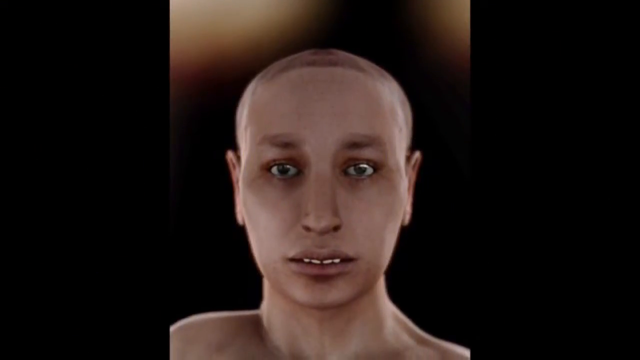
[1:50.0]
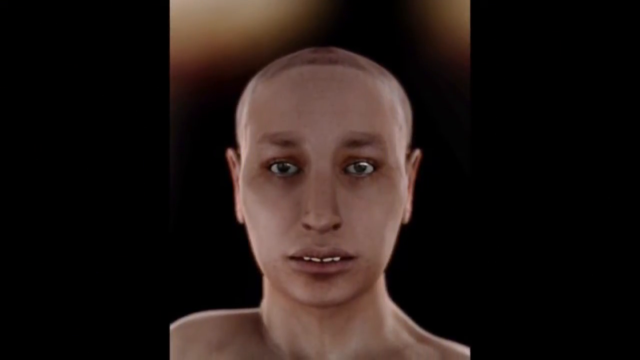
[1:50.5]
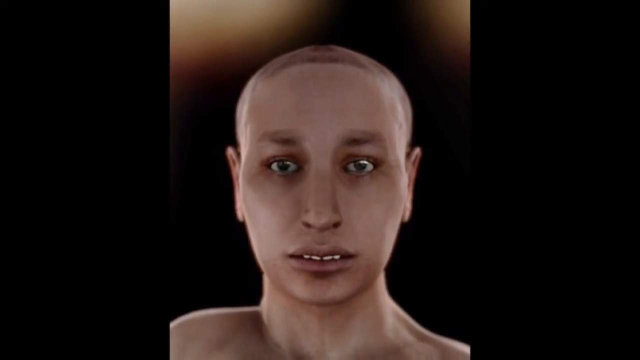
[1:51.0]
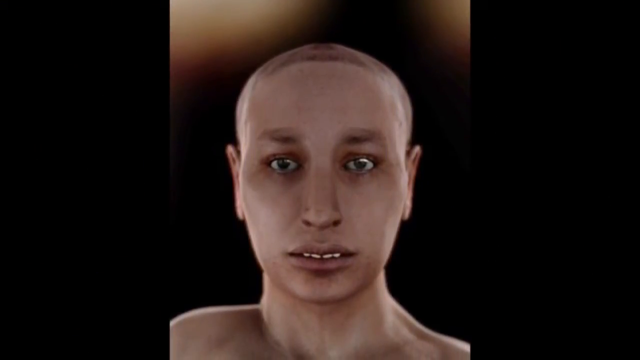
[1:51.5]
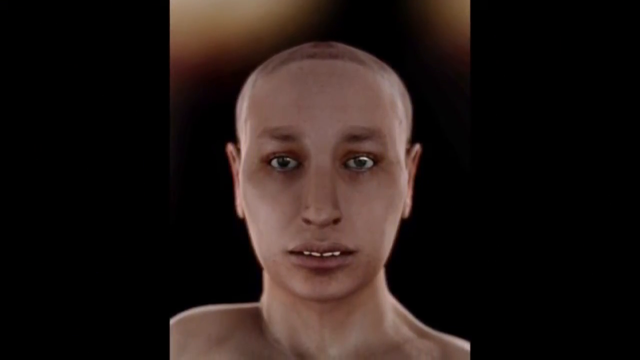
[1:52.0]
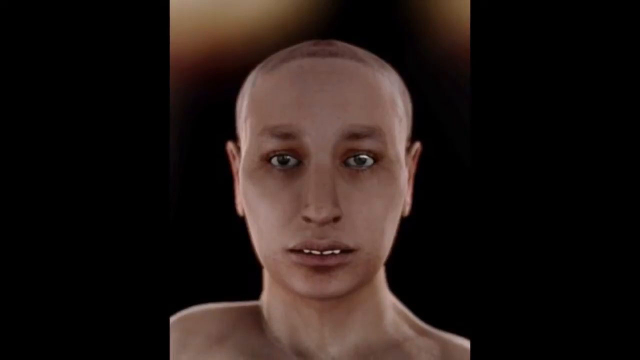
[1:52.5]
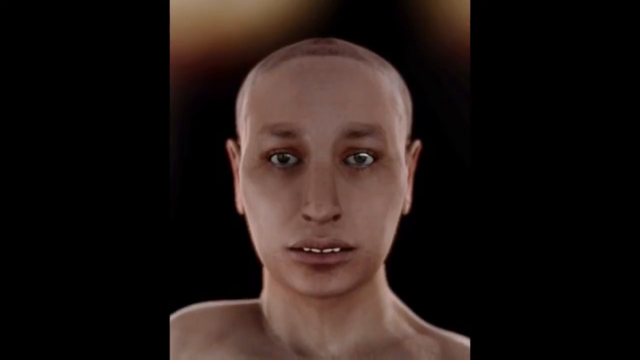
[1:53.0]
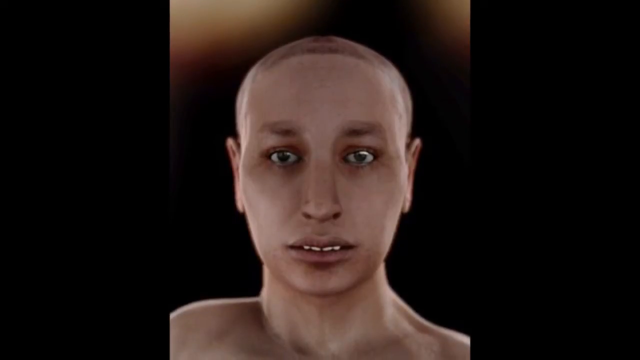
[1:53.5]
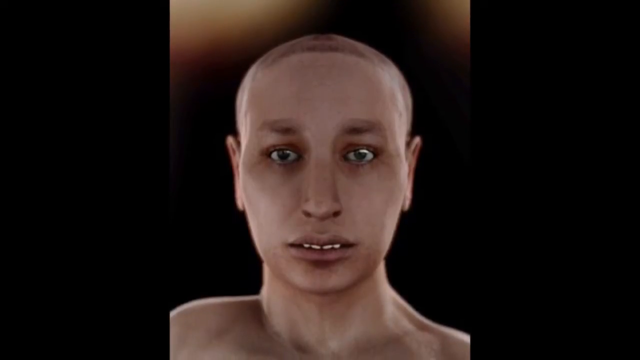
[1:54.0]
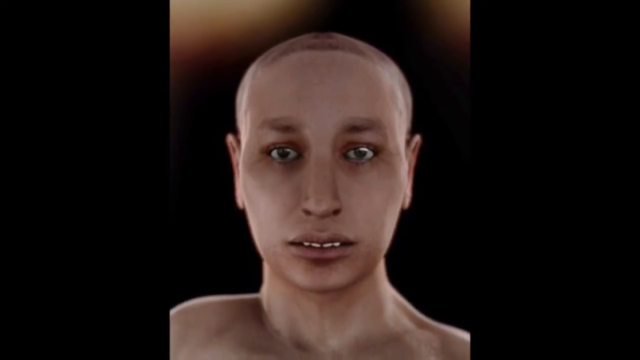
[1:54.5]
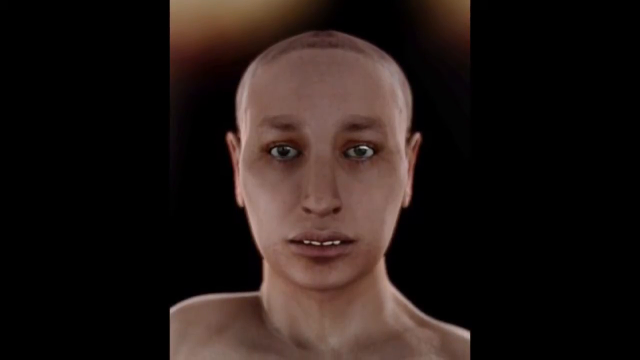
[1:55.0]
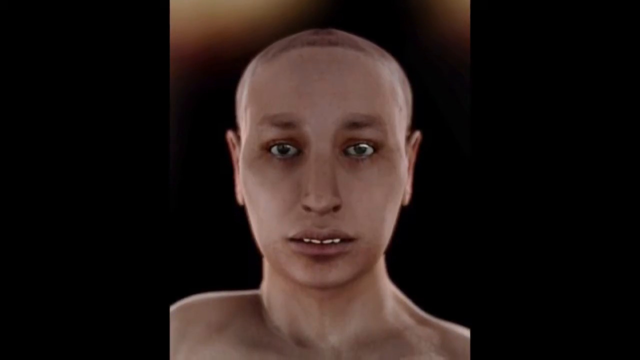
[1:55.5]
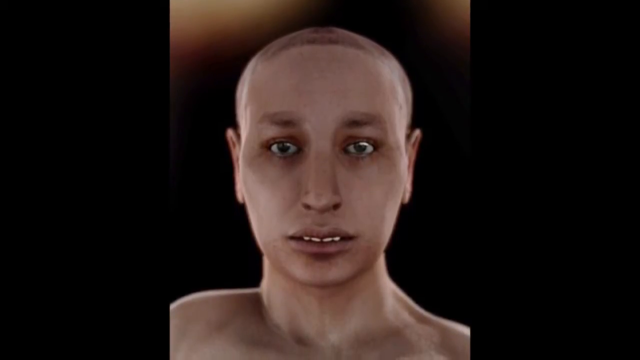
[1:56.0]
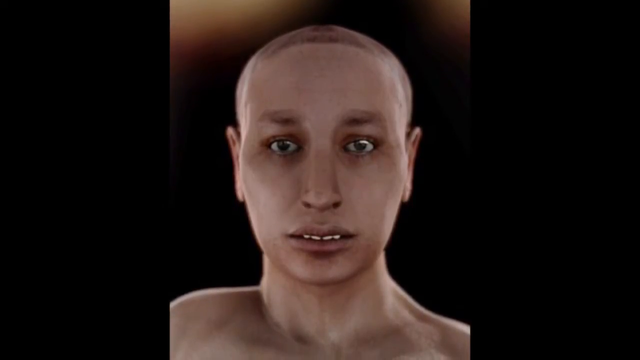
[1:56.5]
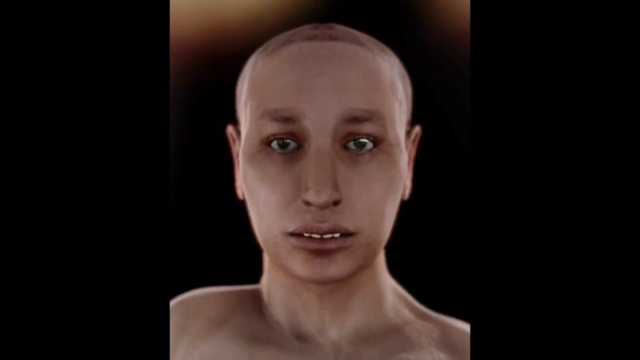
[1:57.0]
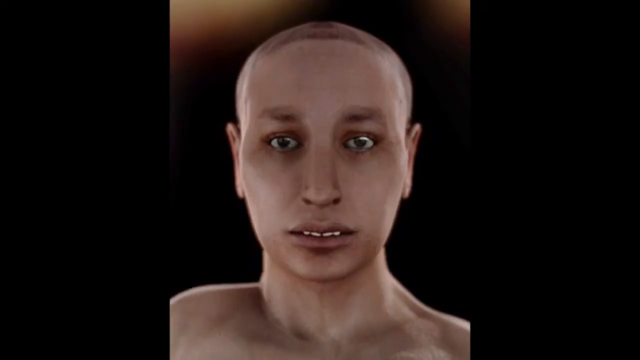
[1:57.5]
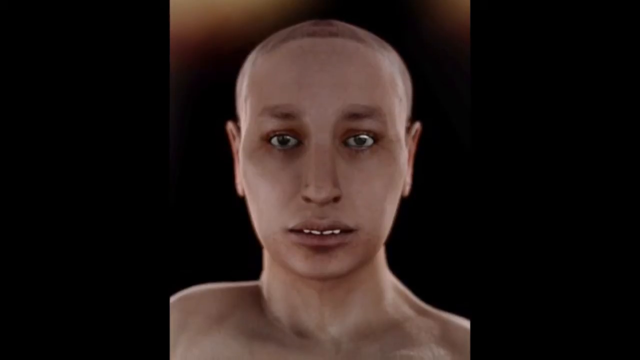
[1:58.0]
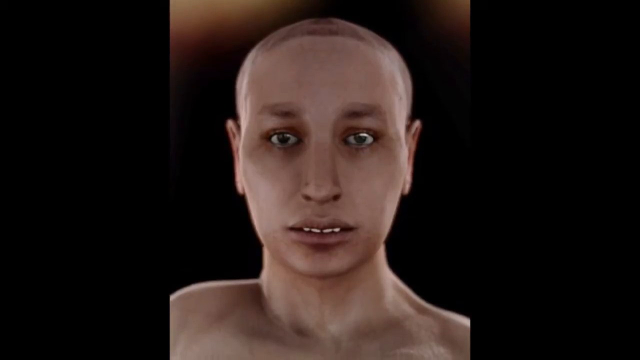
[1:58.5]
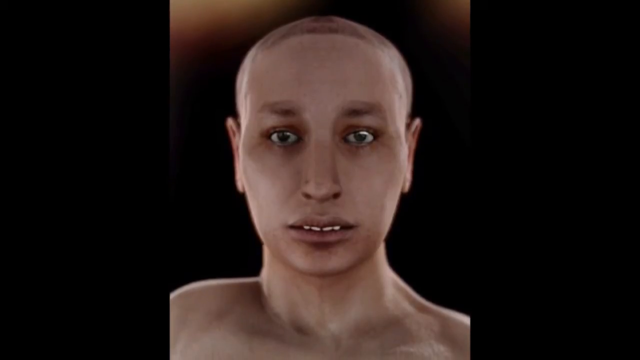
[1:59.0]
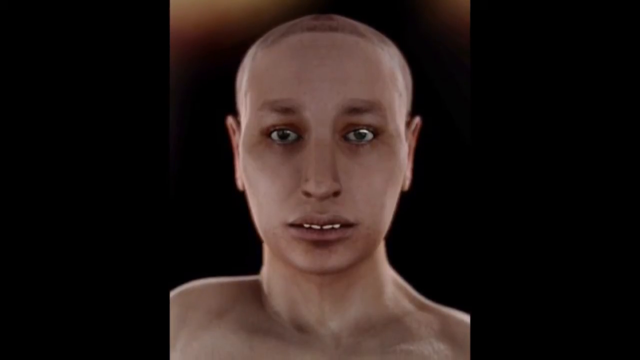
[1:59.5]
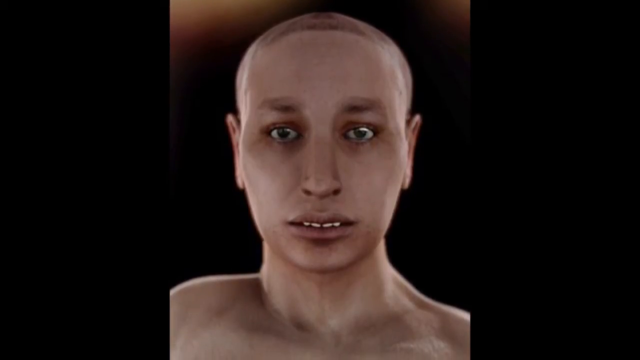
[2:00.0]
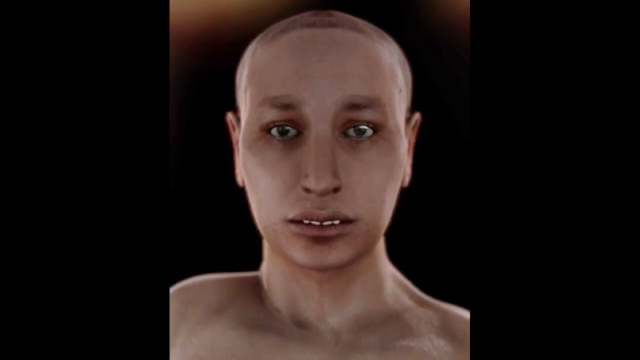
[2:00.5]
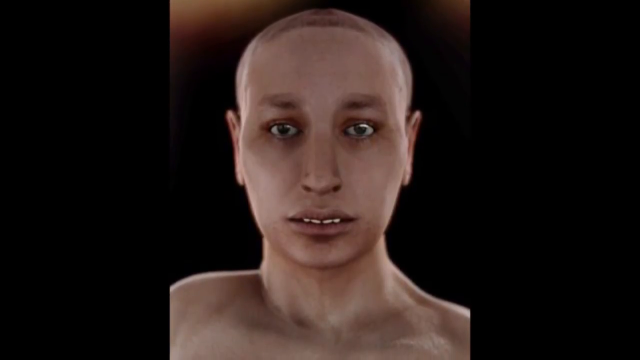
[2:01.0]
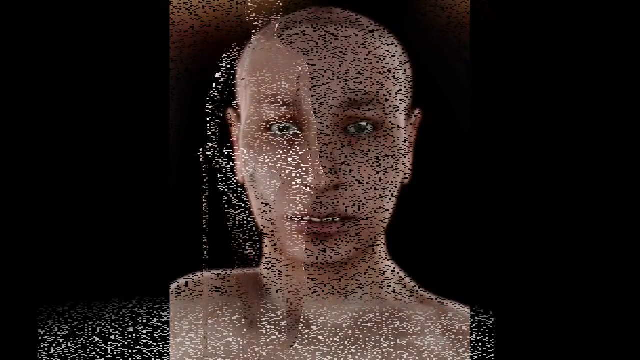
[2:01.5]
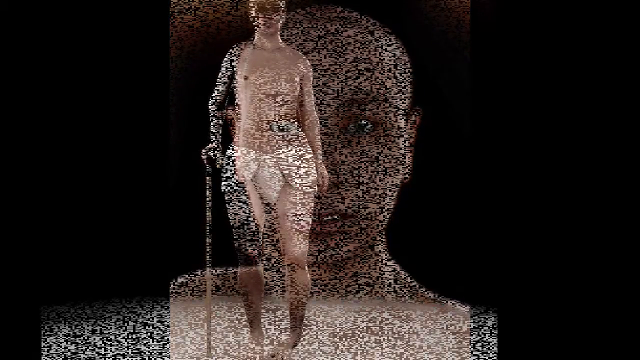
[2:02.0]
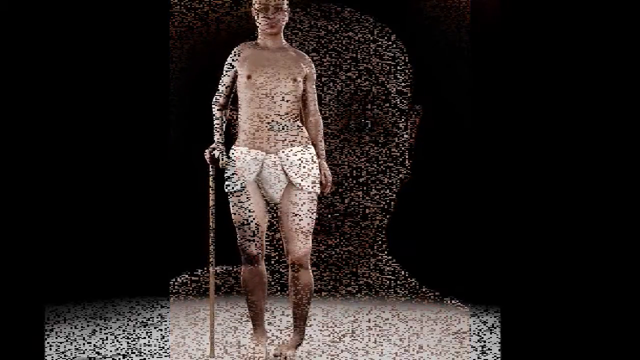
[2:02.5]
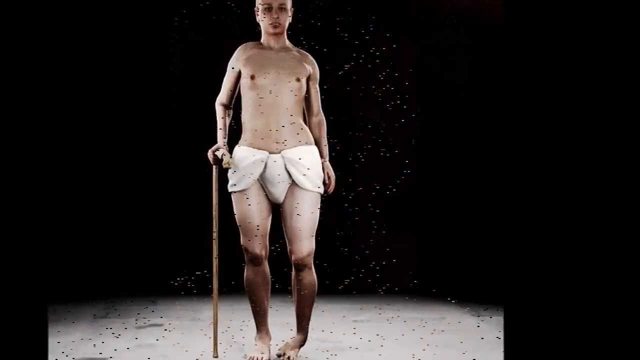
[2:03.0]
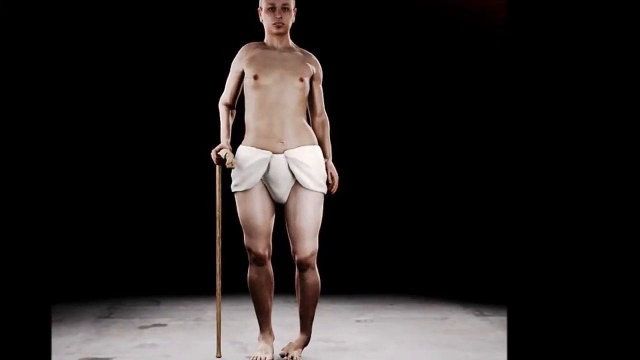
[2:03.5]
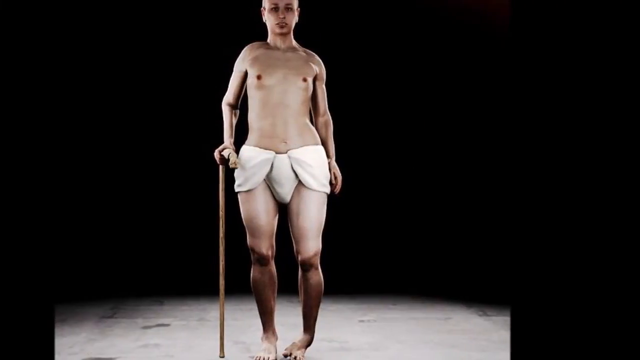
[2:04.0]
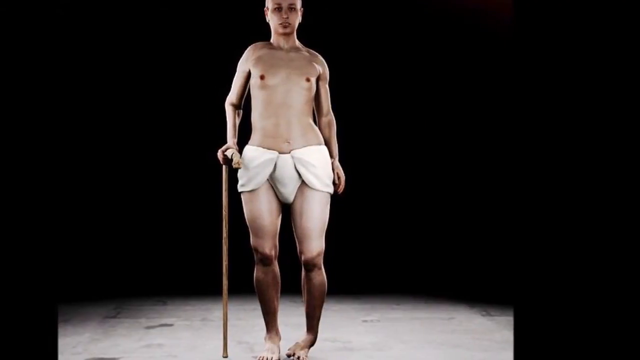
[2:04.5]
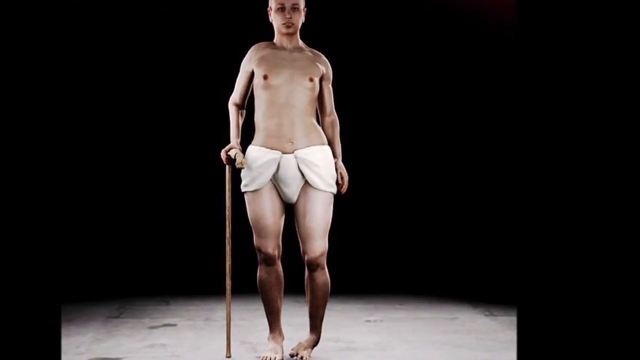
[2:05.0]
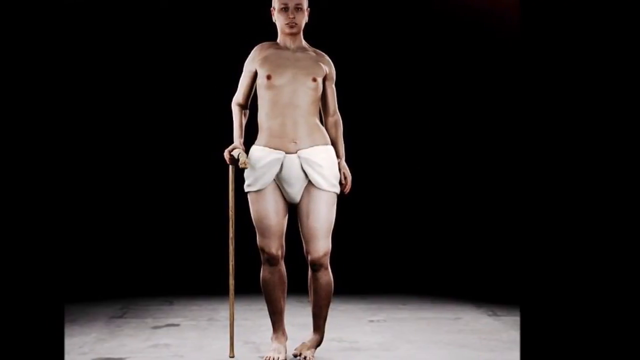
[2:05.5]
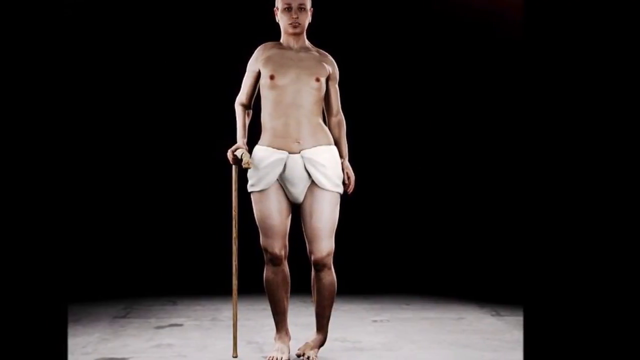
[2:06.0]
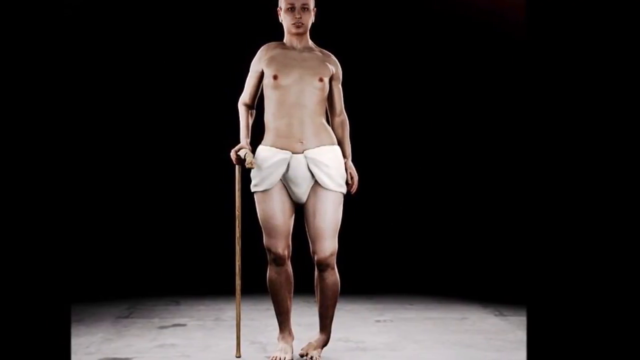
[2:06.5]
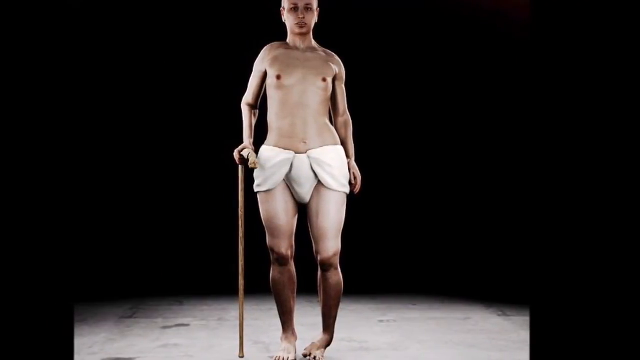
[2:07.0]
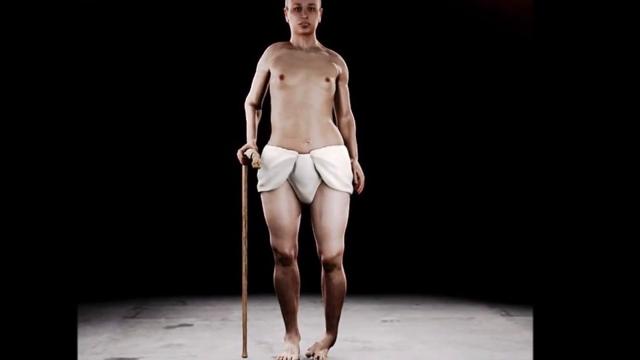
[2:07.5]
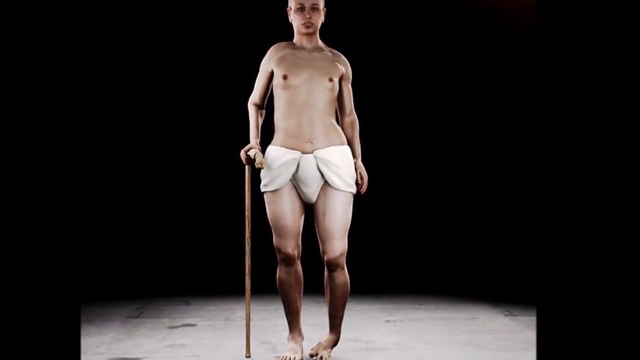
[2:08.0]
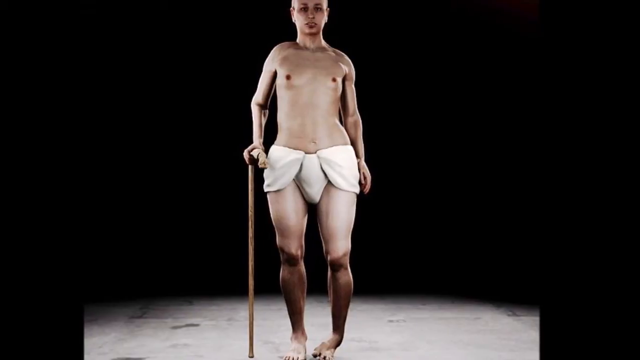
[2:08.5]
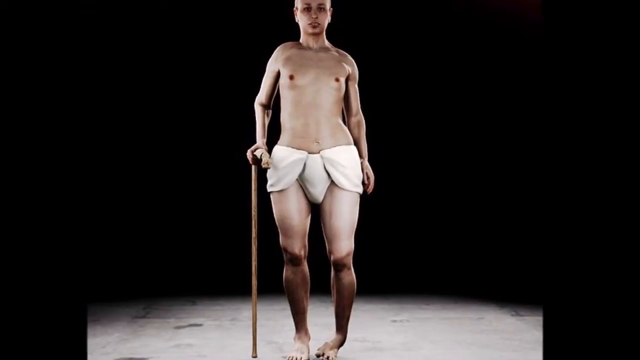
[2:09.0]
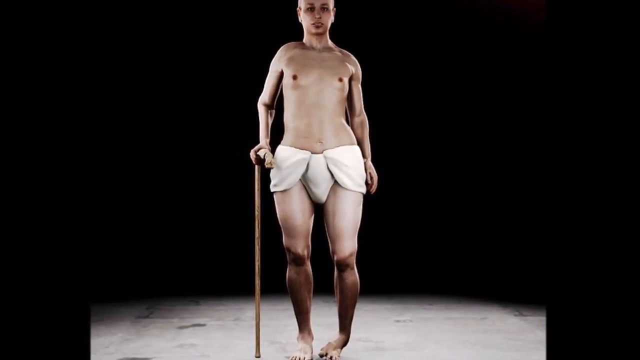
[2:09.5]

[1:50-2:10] What looks like a 3D animated rendition of a young teenage boy's face appears. He has green eyes, his mouth is slightly open with four top teeth showing, his ears are visible, and the background is black. The video pans downward, revealing his bare shoulders as it keeps going down. The image turns grainy and transitions to a zoomed-out view of the same boy's full body. He appears to wear only a white loincloth and is shirtless. He holds a cane in his right hand and looks like he is leaning on it to support himself, with his left hand at his side. His left foot looks crippled and bent inwards. He faces the viewer against a black background as the video pans to the left.